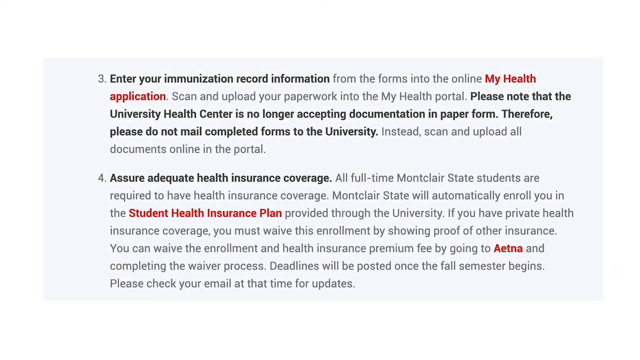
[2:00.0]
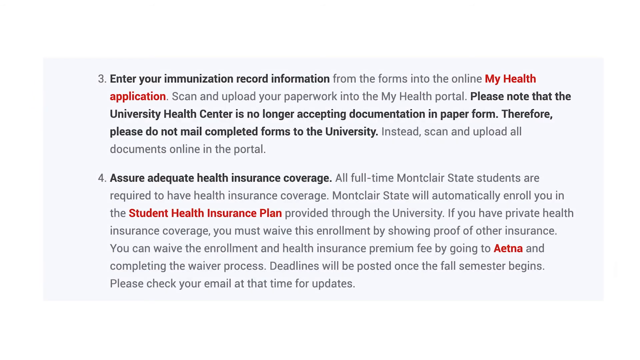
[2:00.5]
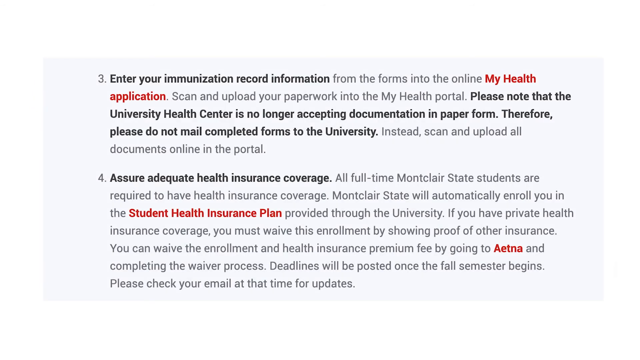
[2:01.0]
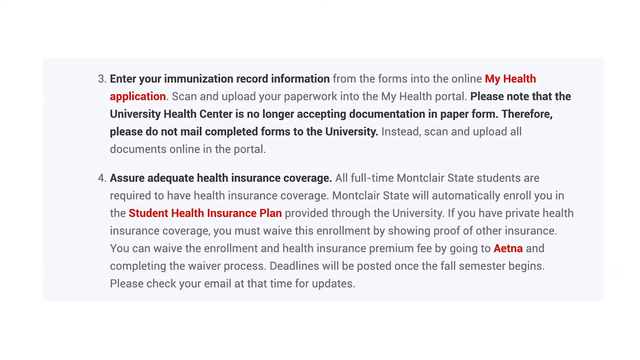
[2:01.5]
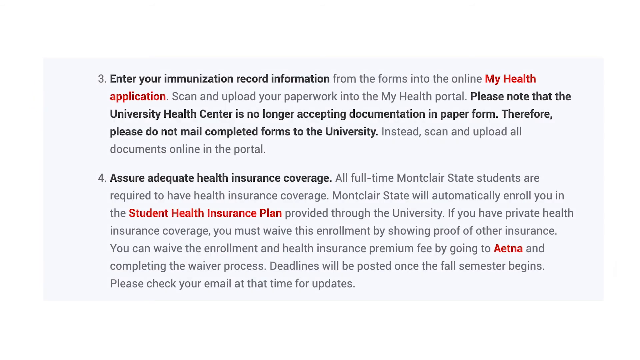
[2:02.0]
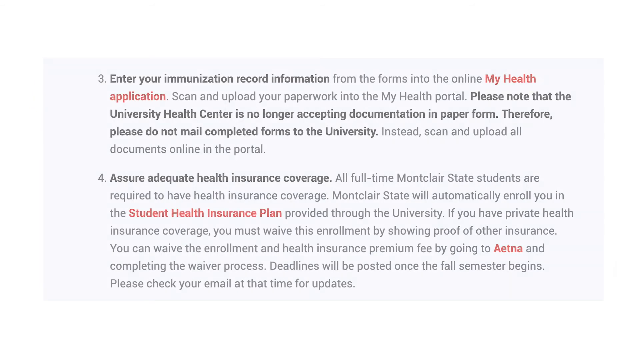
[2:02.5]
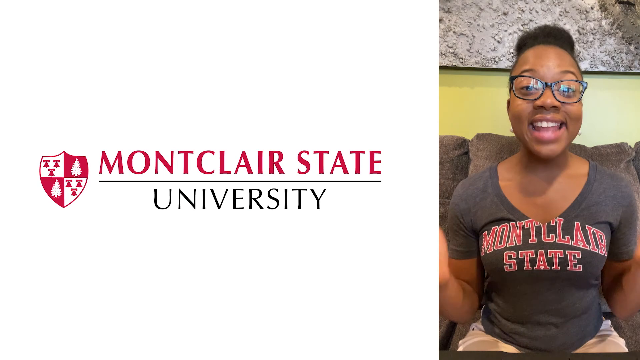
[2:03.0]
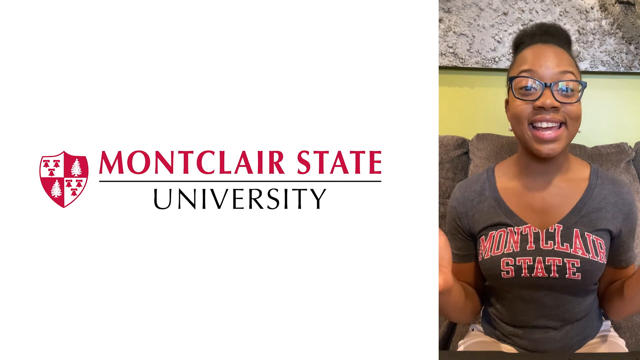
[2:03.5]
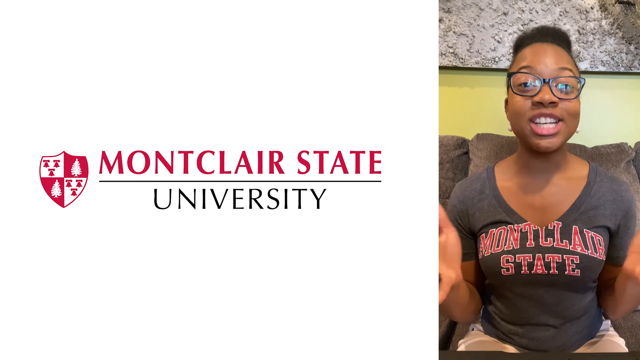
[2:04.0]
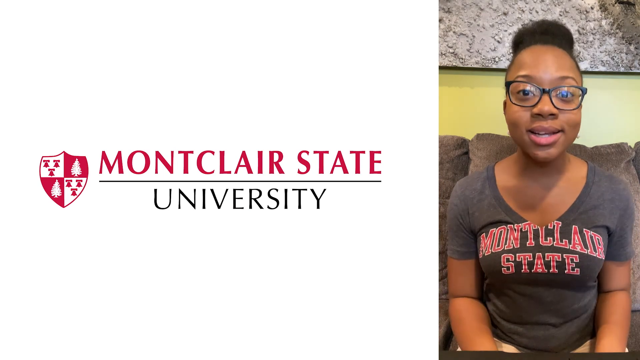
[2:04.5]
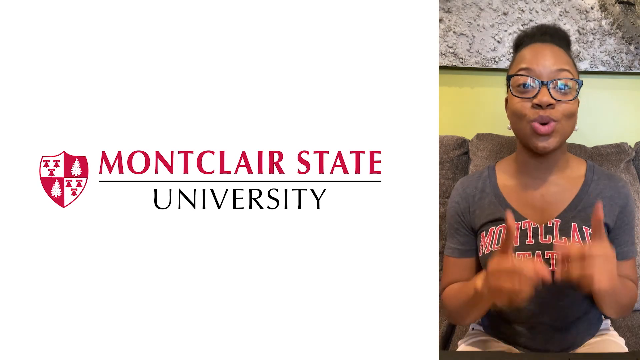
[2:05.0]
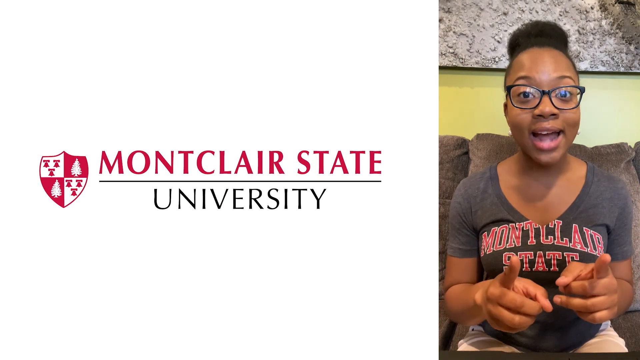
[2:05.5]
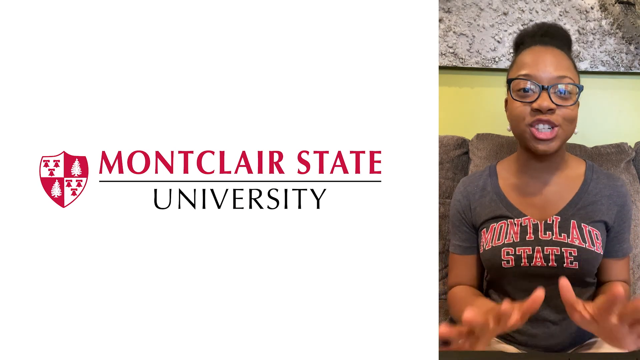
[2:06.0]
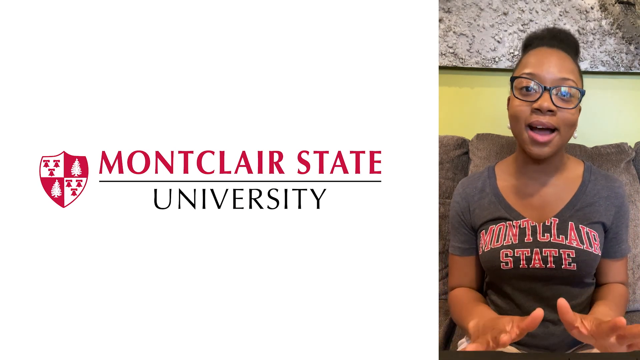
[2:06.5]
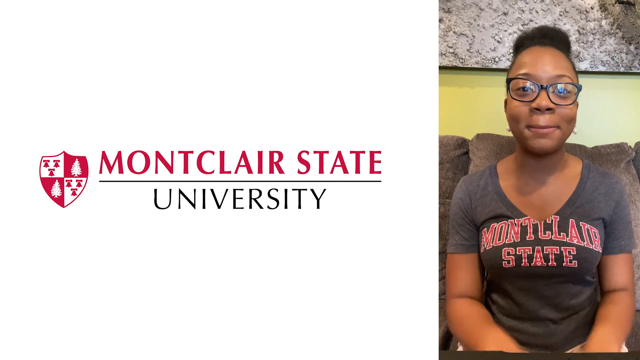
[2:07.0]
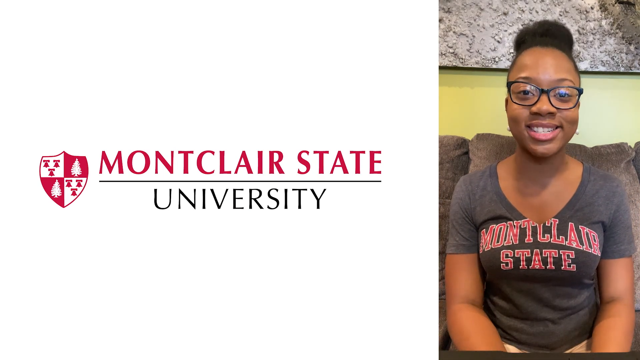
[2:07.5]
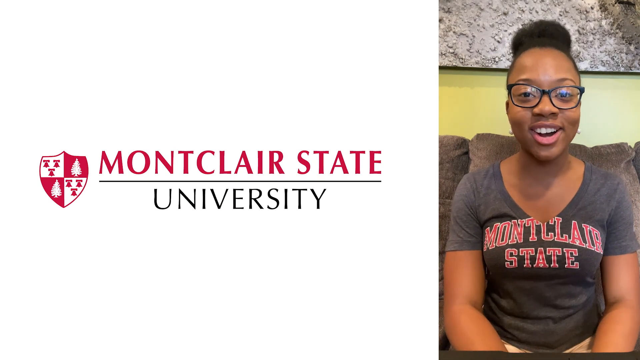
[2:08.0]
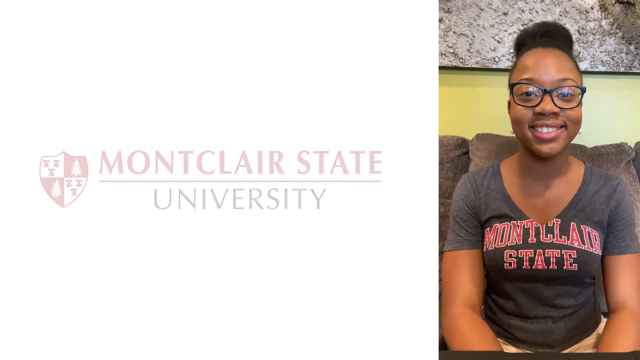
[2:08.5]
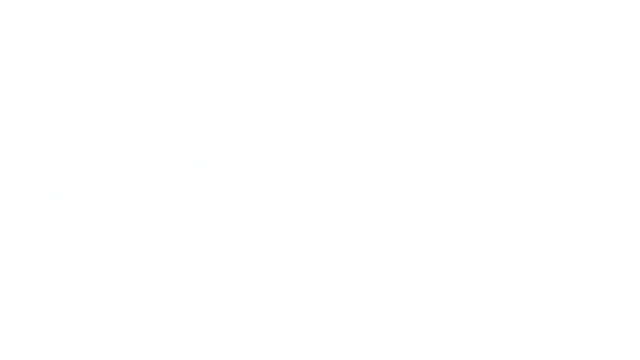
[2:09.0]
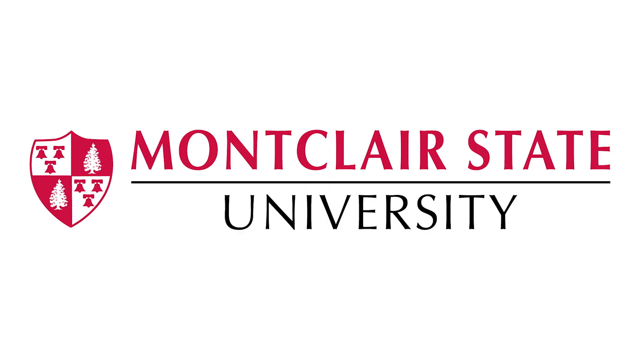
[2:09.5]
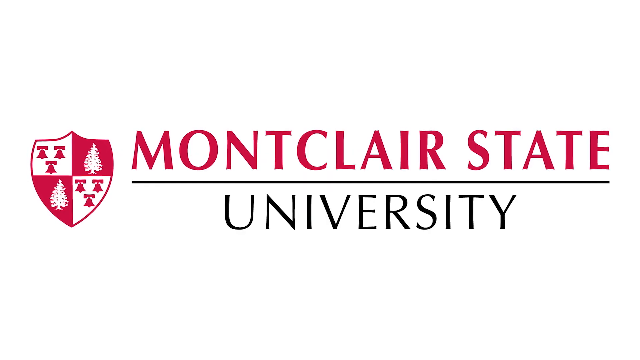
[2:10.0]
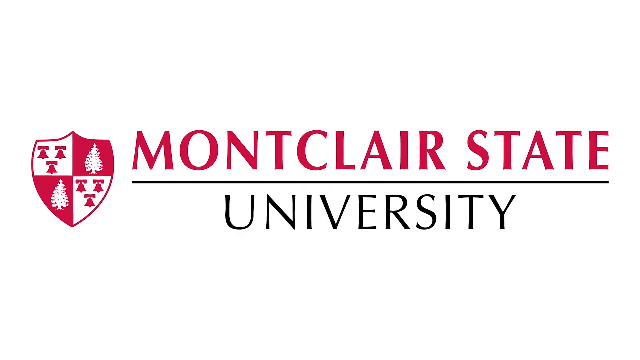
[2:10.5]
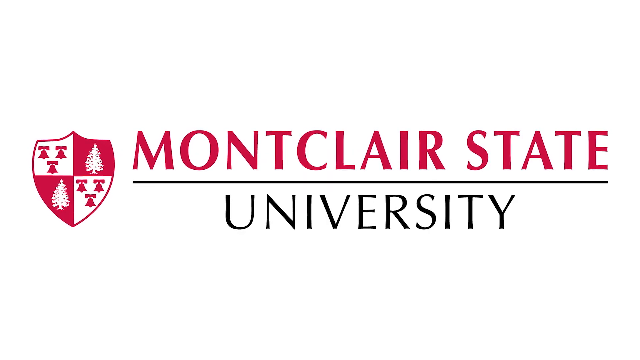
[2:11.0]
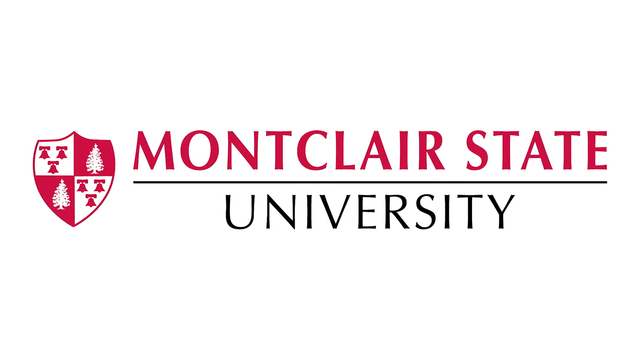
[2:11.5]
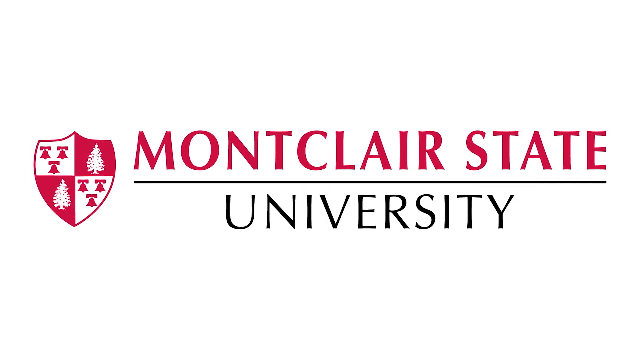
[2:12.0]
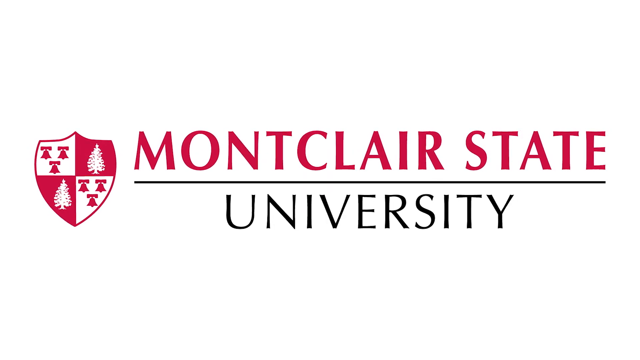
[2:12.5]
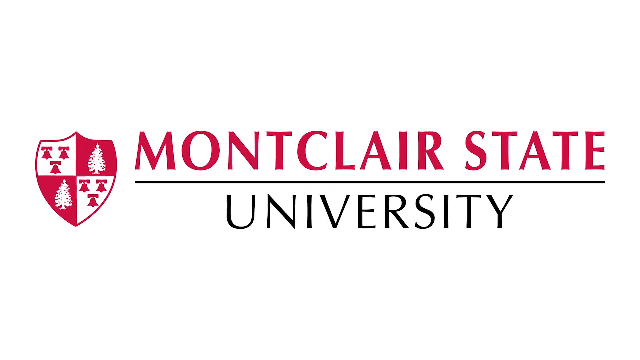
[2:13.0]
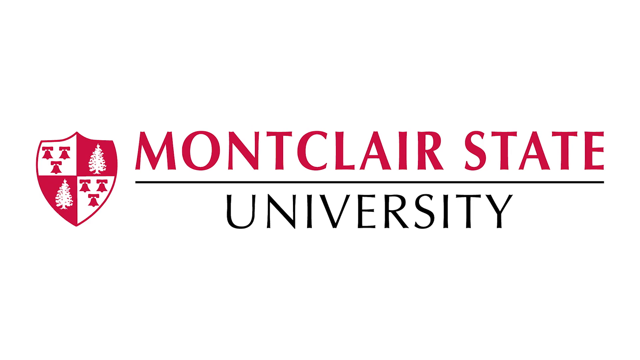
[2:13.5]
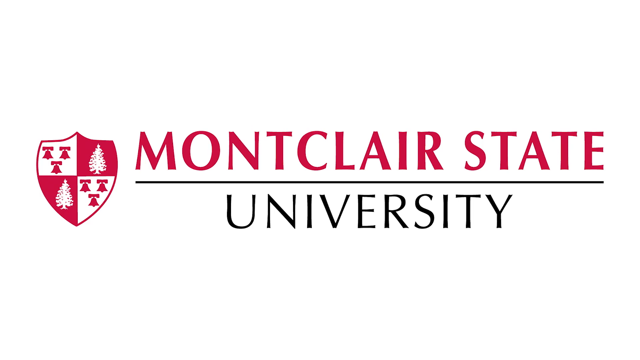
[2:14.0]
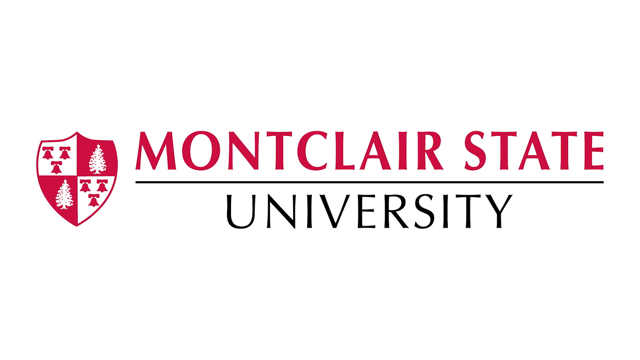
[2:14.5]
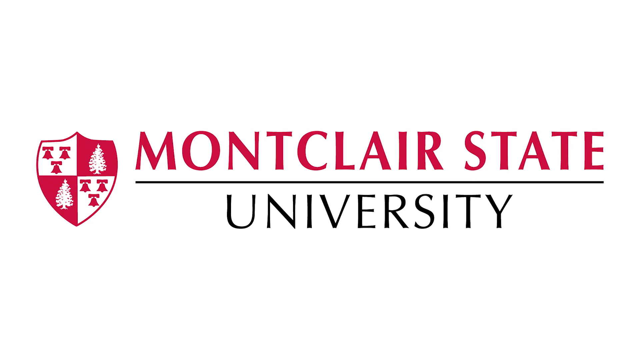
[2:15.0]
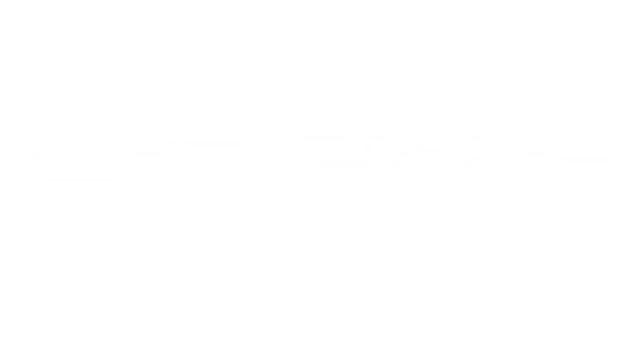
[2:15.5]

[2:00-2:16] The final step reminds students that once they have committed to the university, they must submit their health documents, including the completed immunization forms and proof of health insurance required for all full-time students, to the university health center. The video then returns to the host, Cherise Jackson, who smiles as she wraps up the presentation. It closes with a final shot of the Montclair State University logo, showing its red and white shield.